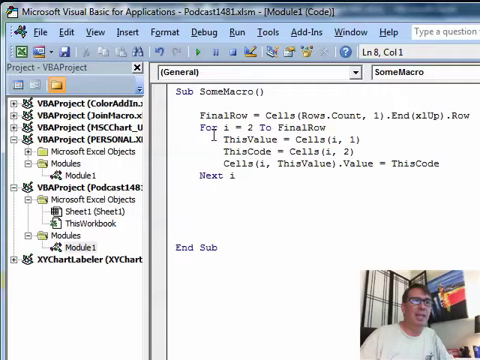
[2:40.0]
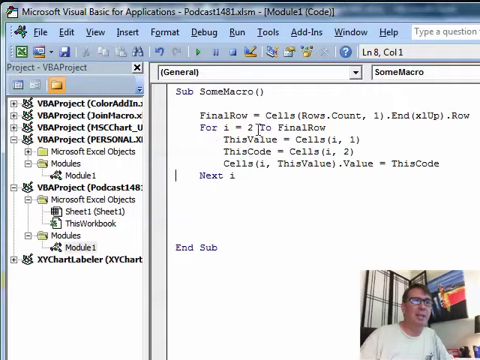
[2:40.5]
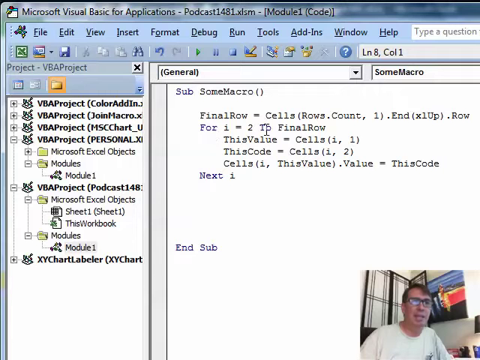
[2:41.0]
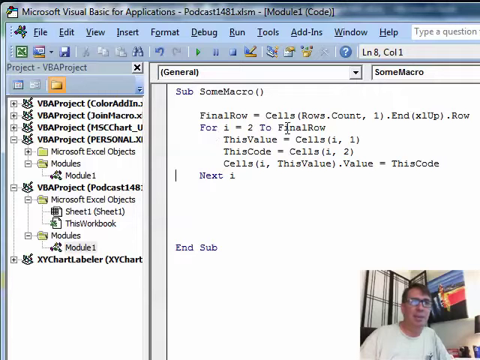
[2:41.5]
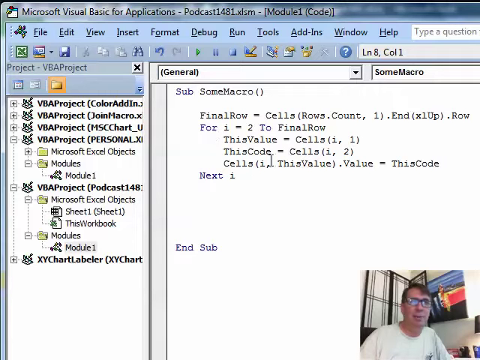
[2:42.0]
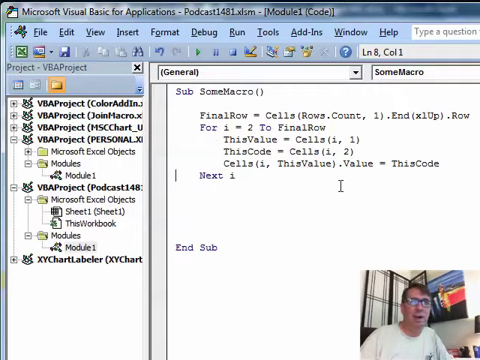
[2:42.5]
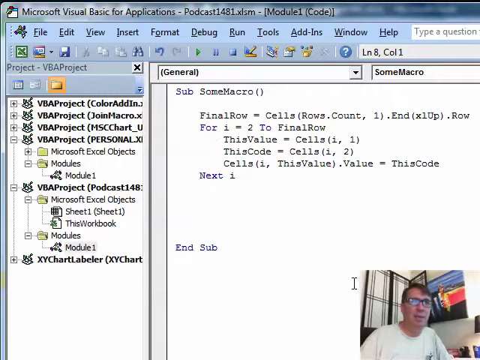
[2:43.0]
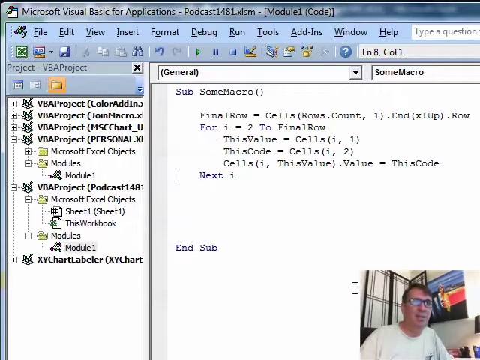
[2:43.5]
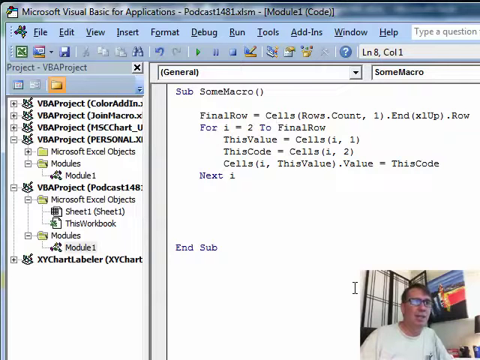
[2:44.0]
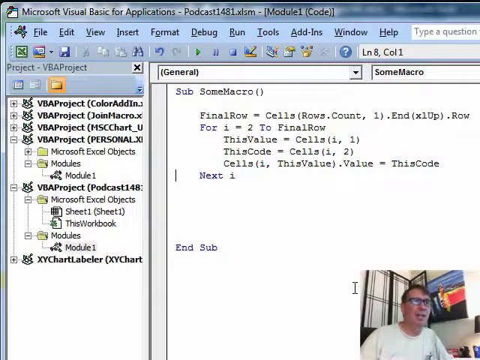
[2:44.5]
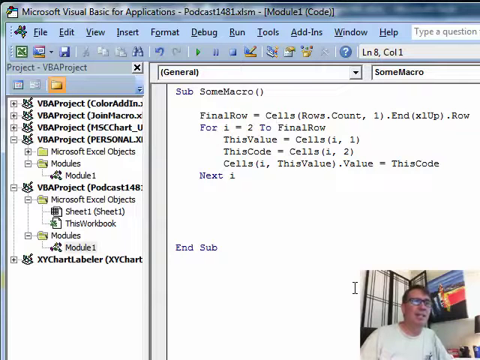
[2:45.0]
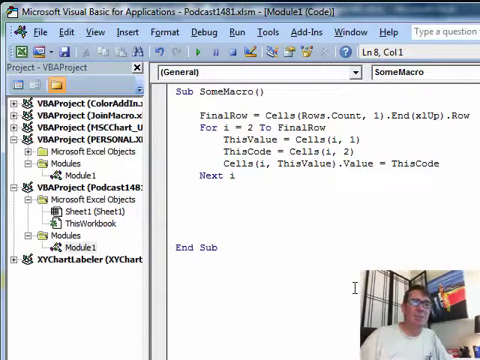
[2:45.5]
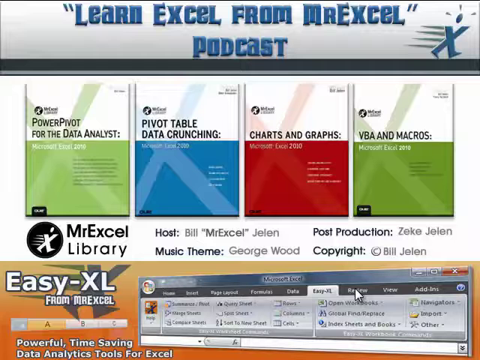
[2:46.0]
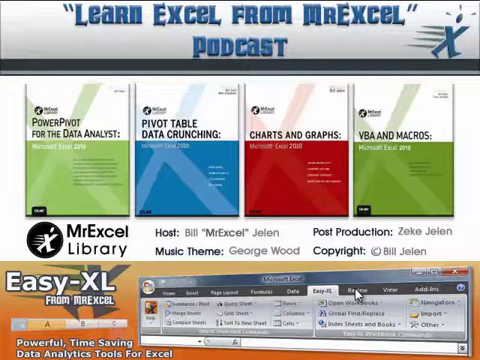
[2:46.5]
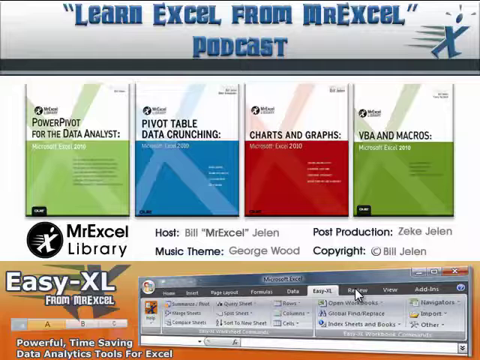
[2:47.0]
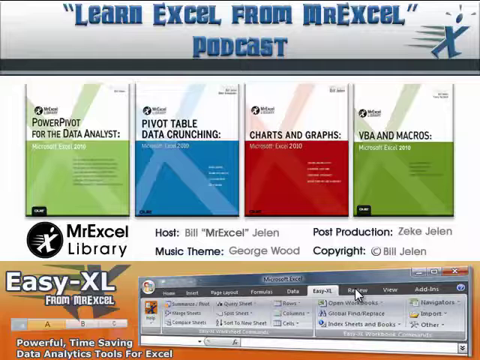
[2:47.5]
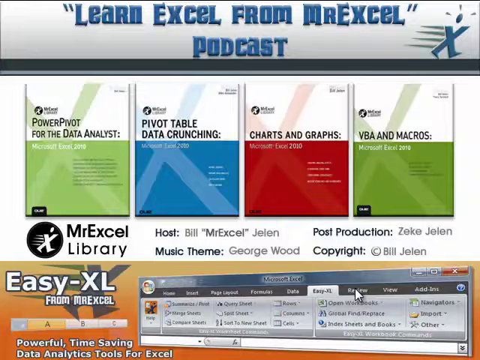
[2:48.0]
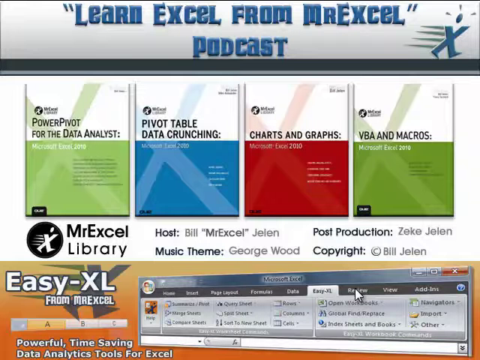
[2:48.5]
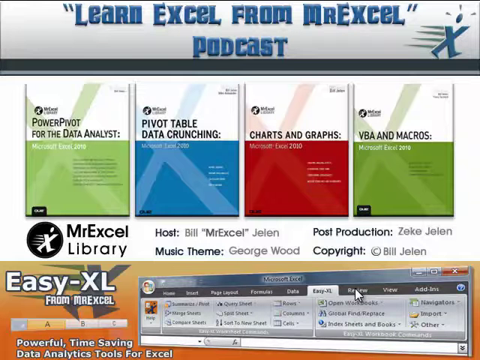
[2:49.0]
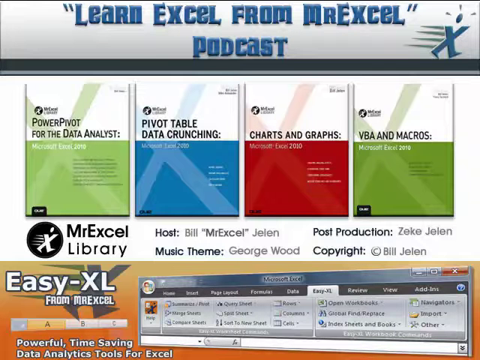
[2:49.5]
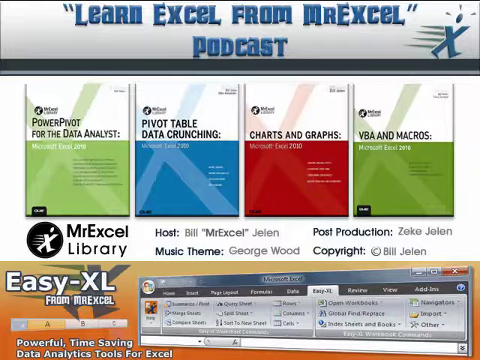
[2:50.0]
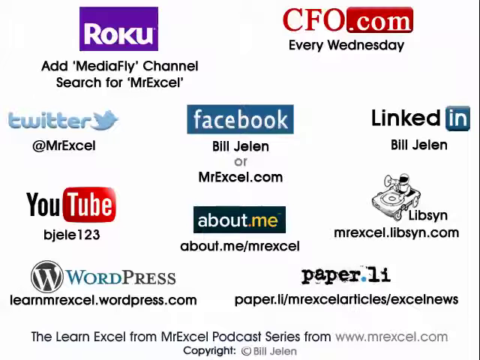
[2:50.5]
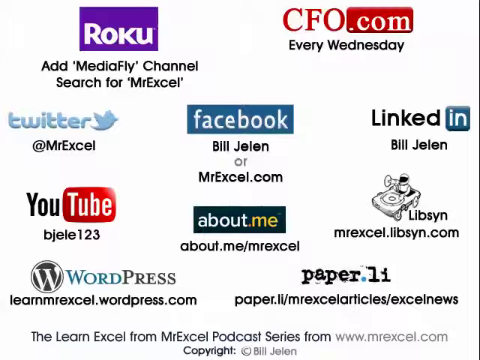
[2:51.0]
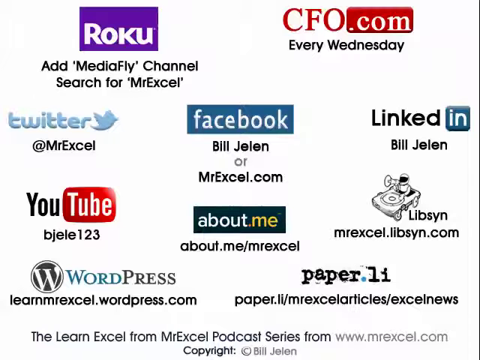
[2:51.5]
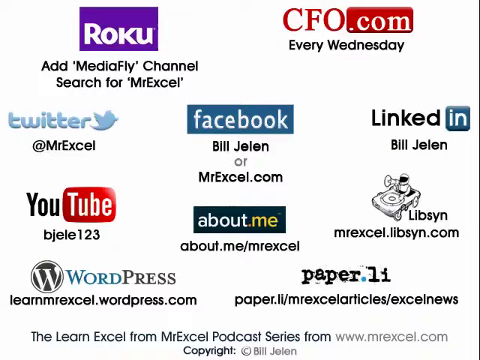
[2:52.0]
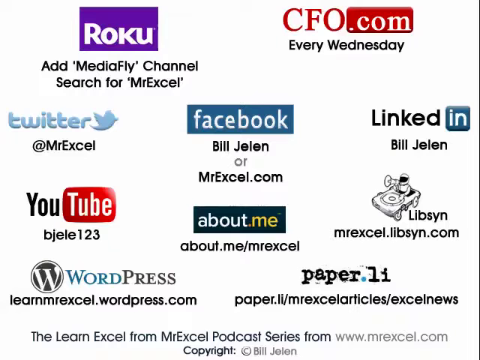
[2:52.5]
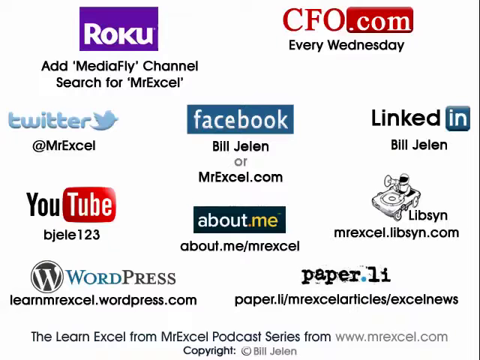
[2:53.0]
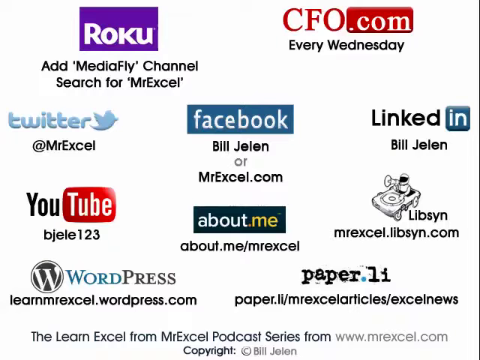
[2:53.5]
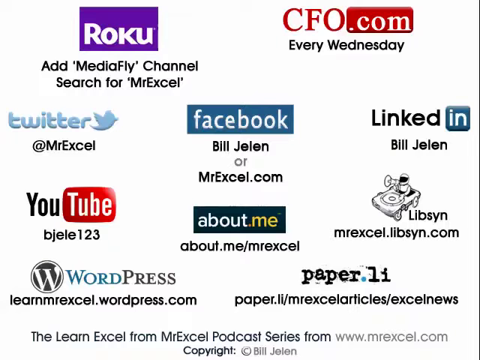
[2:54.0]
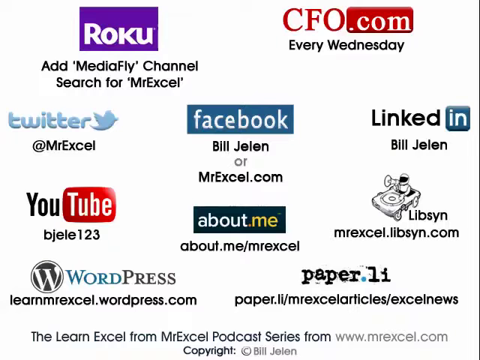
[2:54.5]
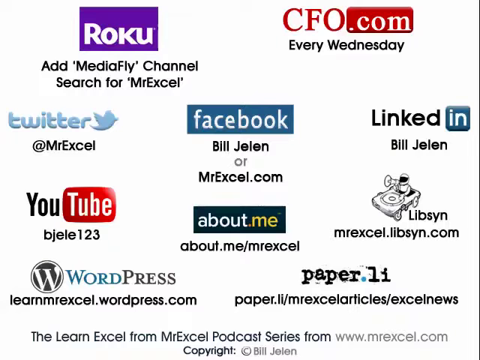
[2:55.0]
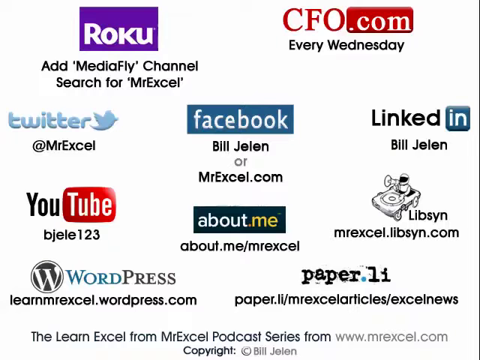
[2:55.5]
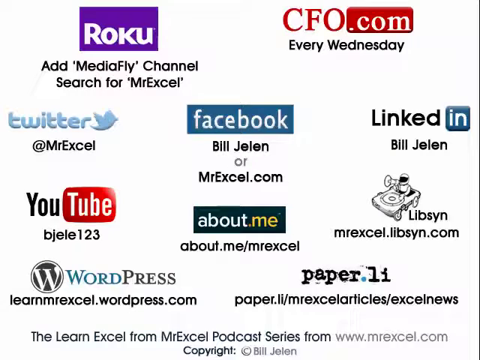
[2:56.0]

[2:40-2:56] The video starts on the Visual Basic for Applications screen with the picture-in-picture of the man teaching Excel; he is white, with dark hair, black glasses and a white shirt. Then a new screen appears reading "learn Excel from Mr. Excel podcast Power pivot for the data analyst pivot table data crunching charts and graphs VBA and macros" and "Mr. Excel library." A small logo looks like an X made to look like a person running or walking. Credits read "Mr. Excel Jelen," "music theme George wood," "post-production Jake Zeeland Jelen" and "copyright bill Jelen," with a spreadsheet at the bottom. Then a screen shows various places, apparently where the podcast can be found: Facebook, Roku, Twitter, YouTube, About me, WordPress, paper.Li and LinkedIn, along with their logos, filling the page.